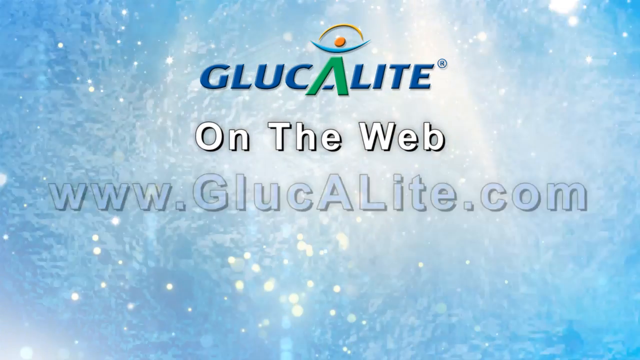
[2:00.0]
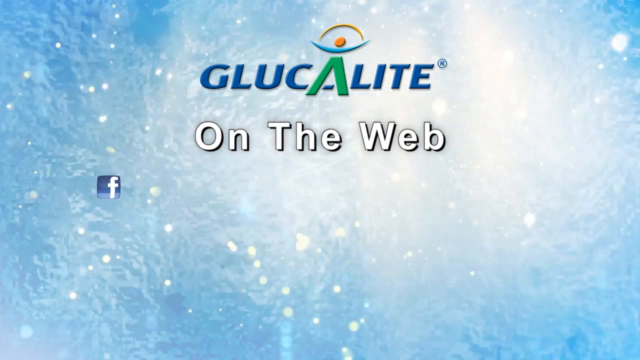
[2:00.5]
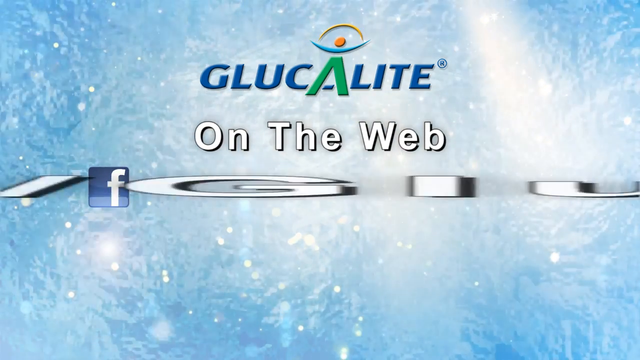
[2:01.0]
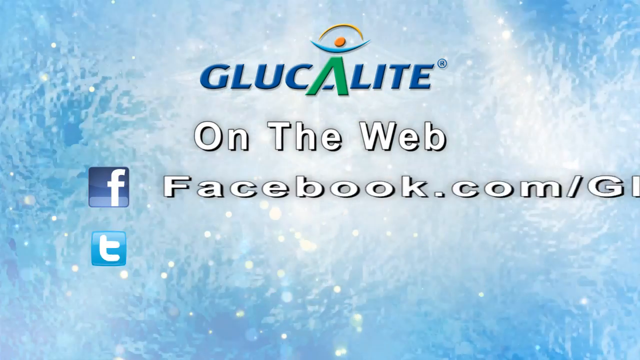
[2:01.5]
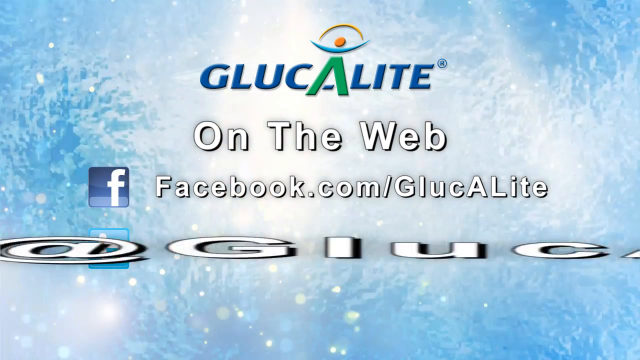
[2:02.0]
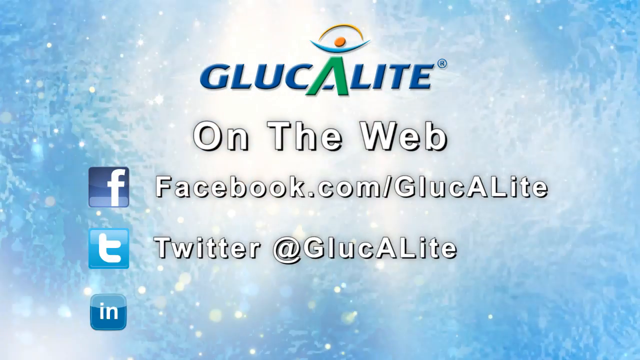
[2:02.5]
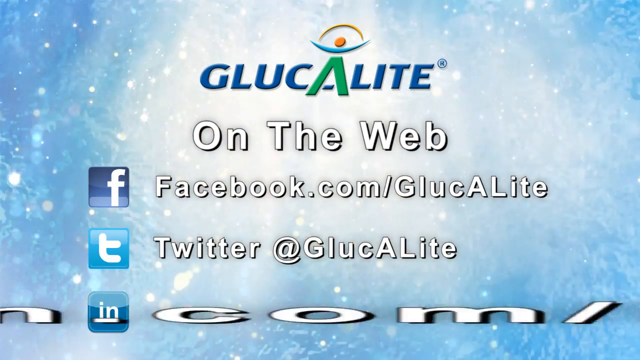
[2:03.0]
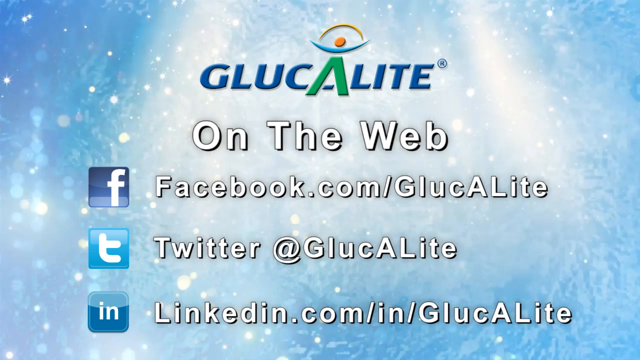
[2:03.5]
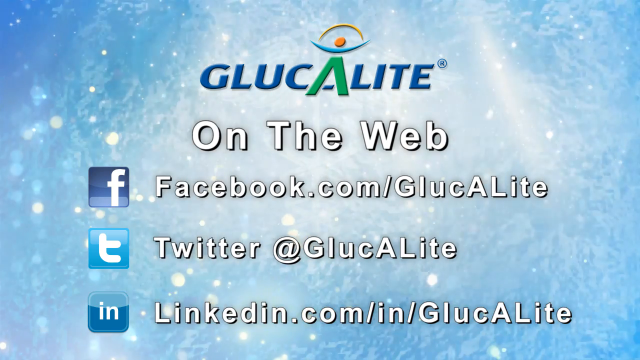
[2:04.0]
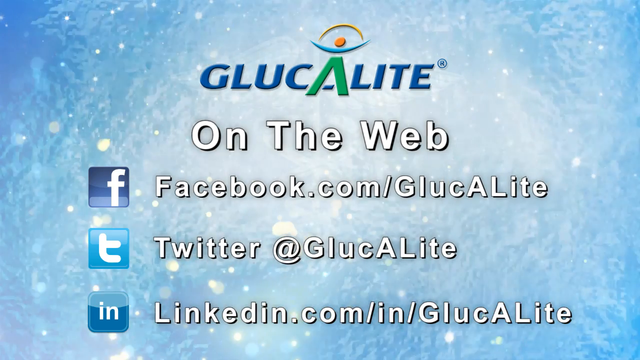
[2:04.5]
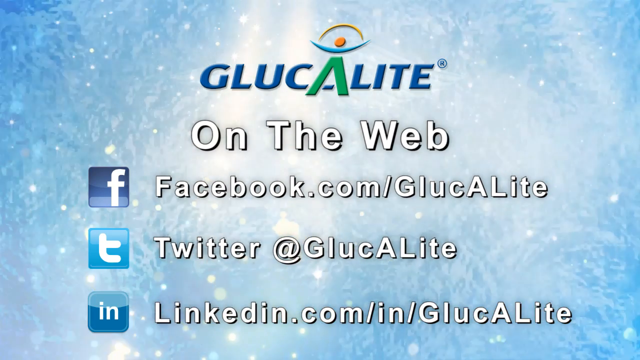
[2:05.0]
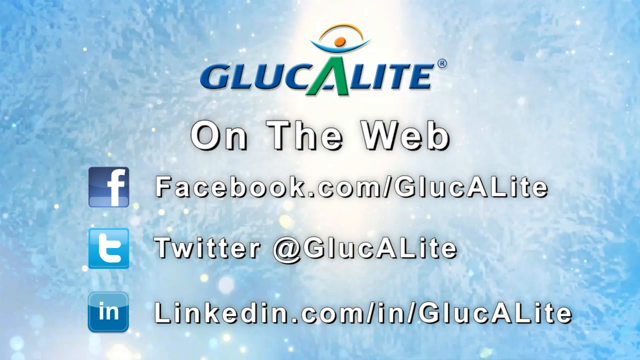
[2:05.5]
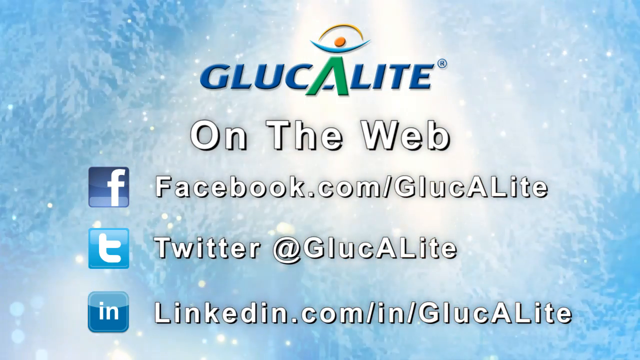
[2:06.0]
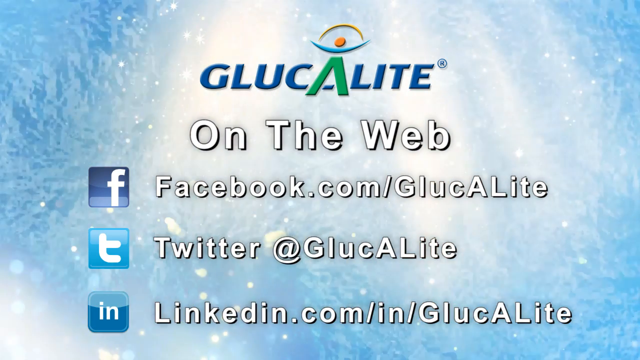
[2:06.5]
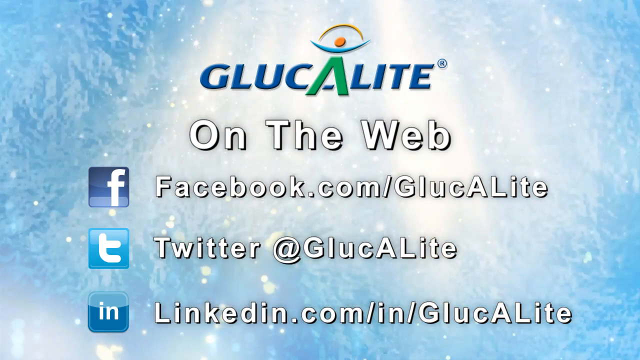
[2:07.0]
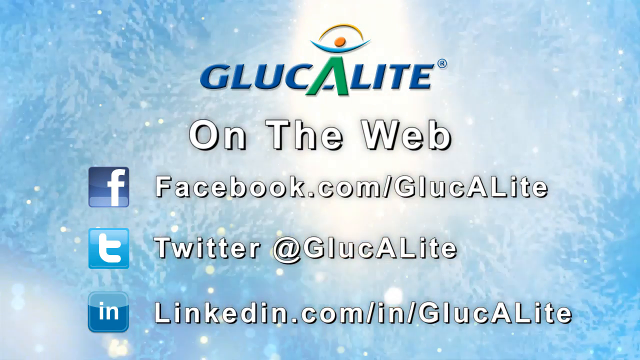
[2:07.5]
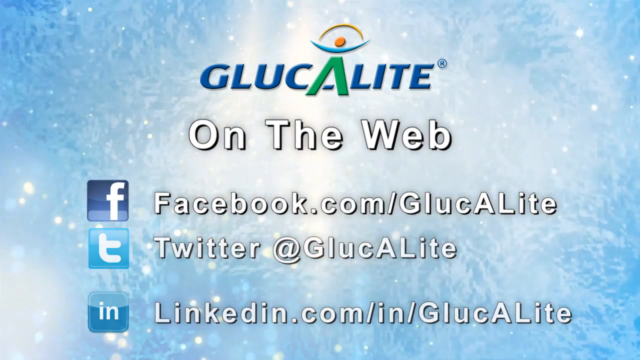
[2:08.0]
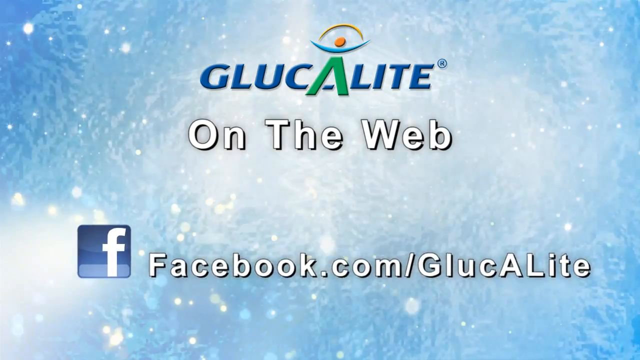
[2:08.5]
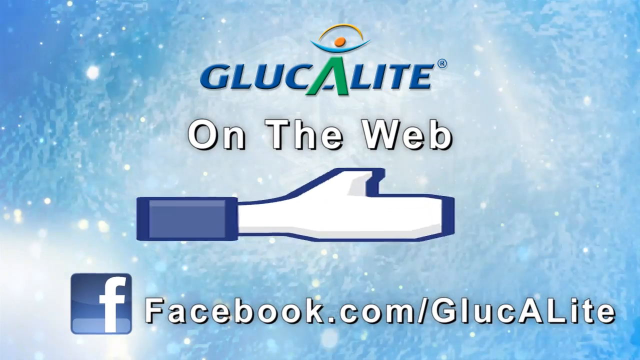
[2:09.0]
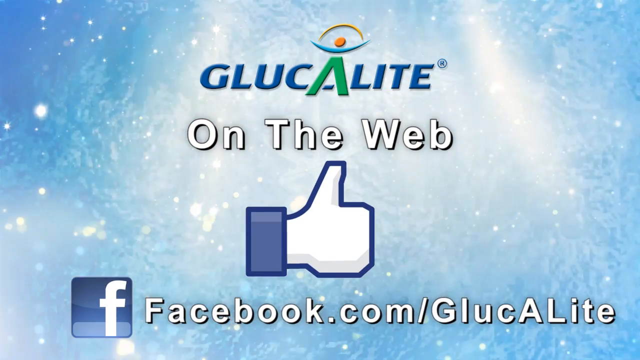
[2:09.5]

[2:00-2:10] A beam of light with many dots around it is shown with the Glucolate logo. All the letters are blue except the A, which is green and forms the legs of the symbol; above it is an upturned blue arc, like a smile, forming arms, an orange head above that, and a smaller yellow arc, like a rainbow, between the two ends of the blue arc and above the small circle. The text says "Glucolate on the web" and lists "Facebook.com/Glucolate," "Twitter at Glucolate" and "LinkedIn.com/in/Glucolate," along with a thumb symbol like the one on Facebook.